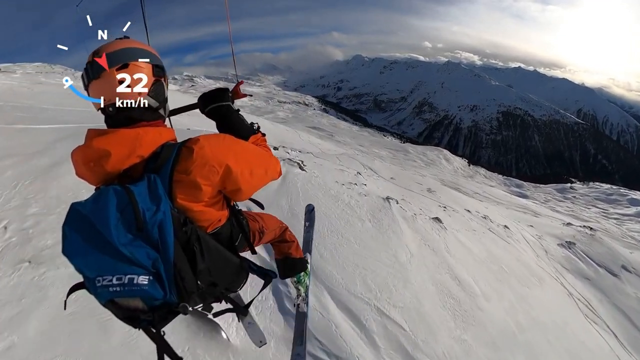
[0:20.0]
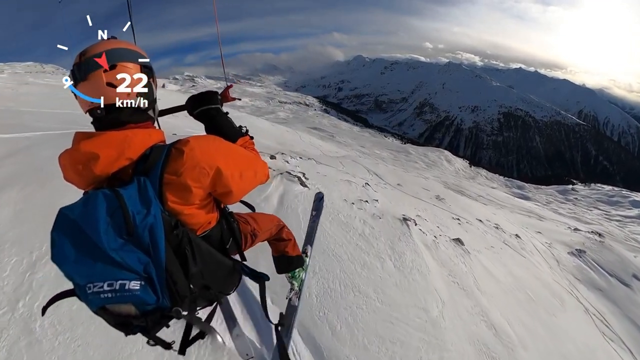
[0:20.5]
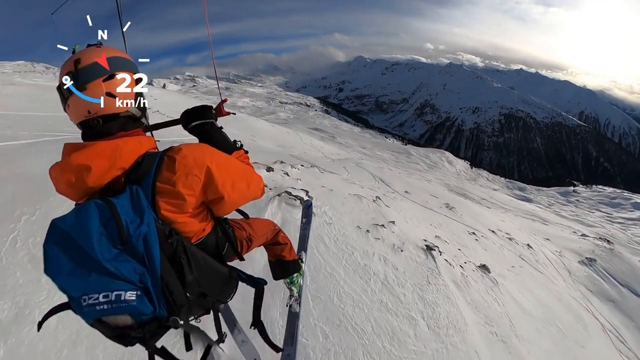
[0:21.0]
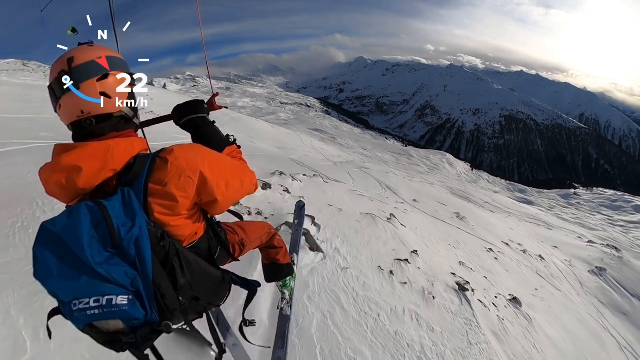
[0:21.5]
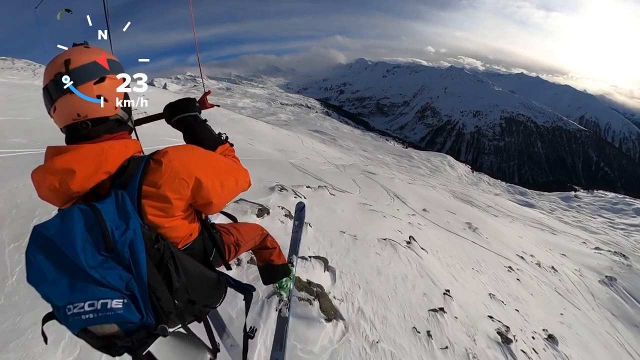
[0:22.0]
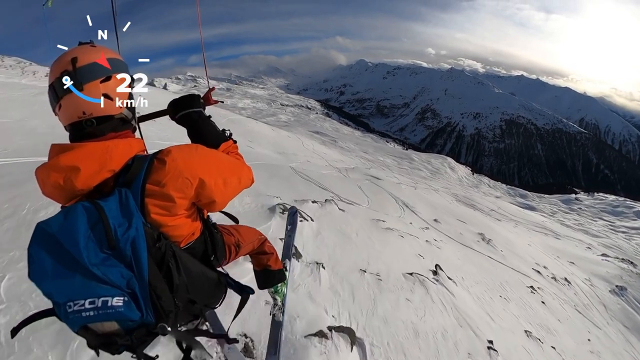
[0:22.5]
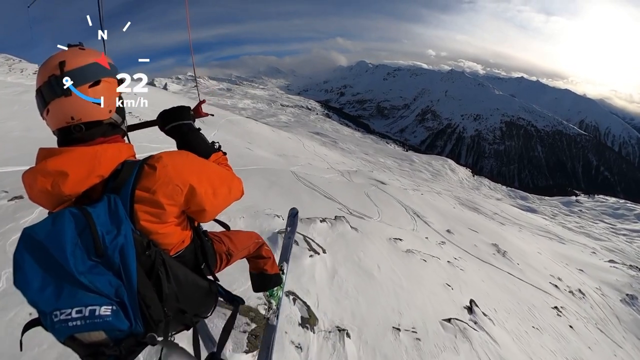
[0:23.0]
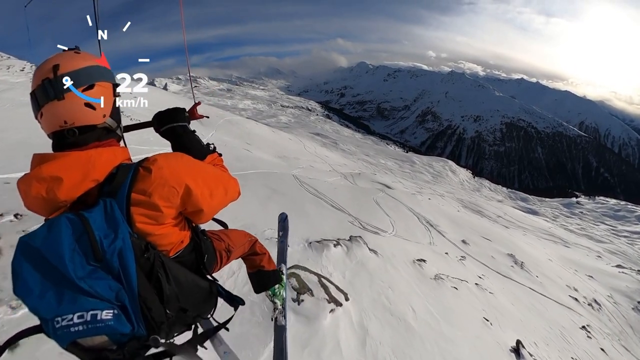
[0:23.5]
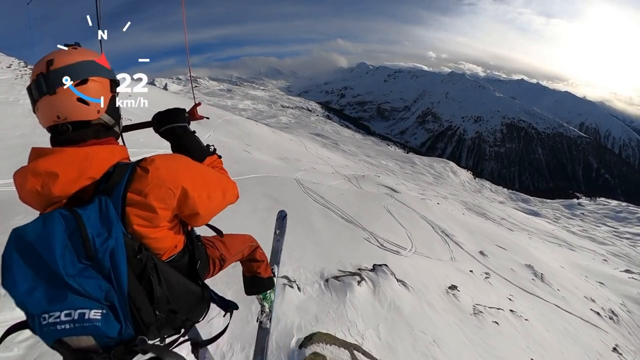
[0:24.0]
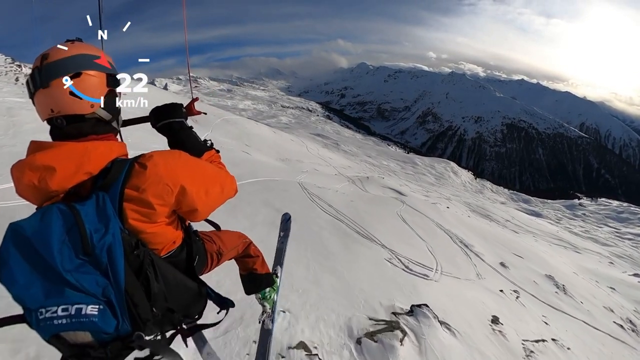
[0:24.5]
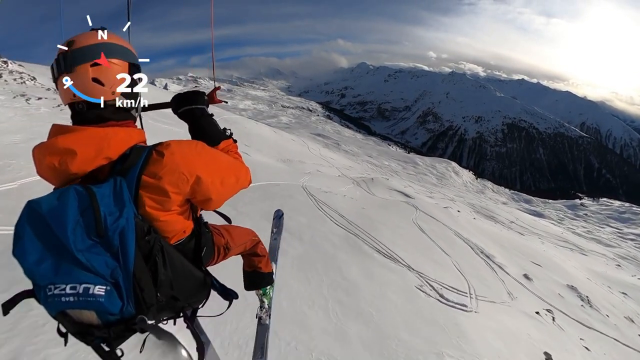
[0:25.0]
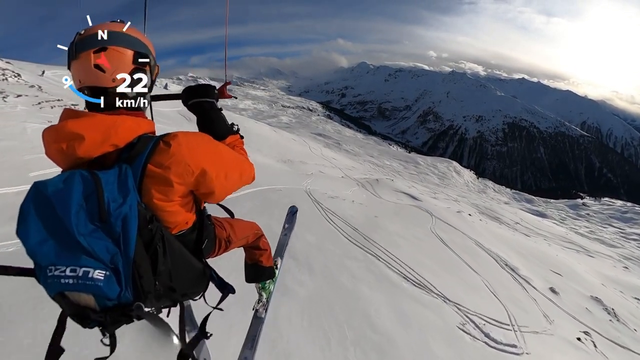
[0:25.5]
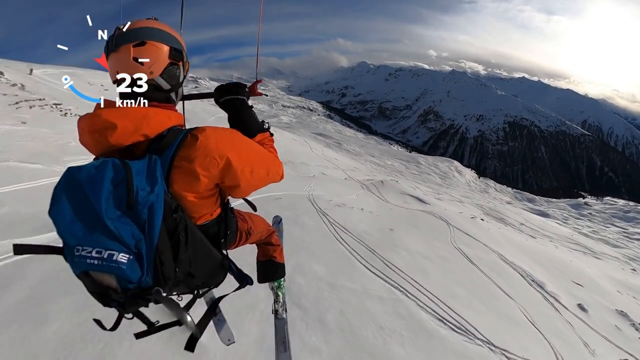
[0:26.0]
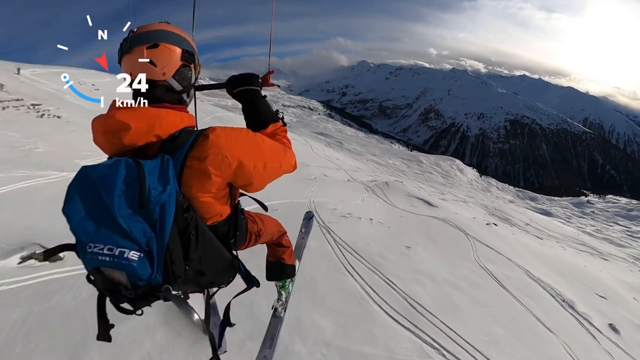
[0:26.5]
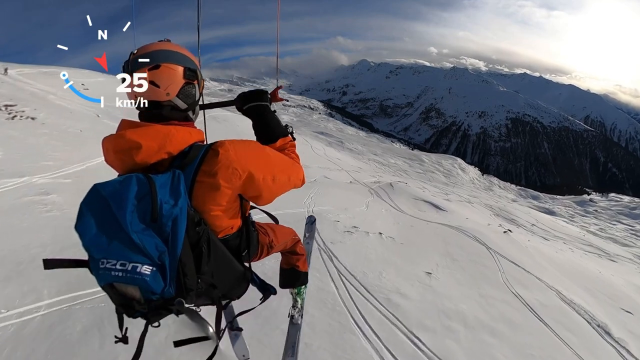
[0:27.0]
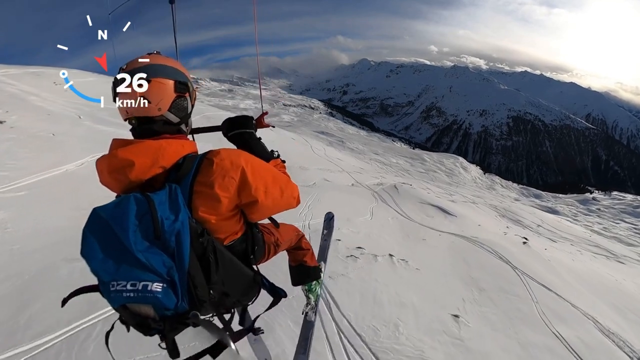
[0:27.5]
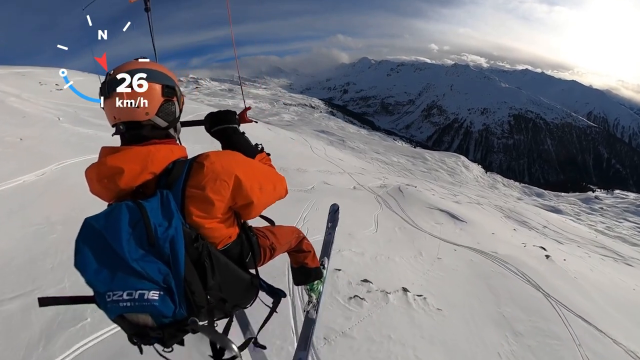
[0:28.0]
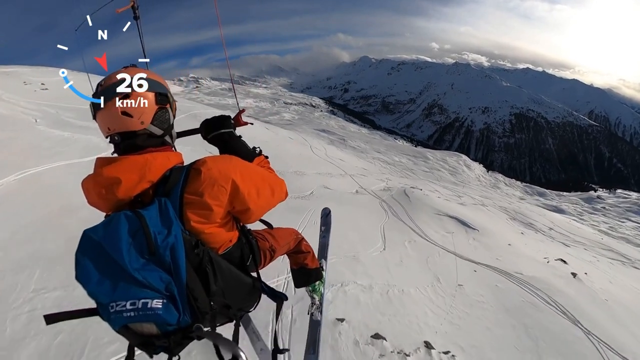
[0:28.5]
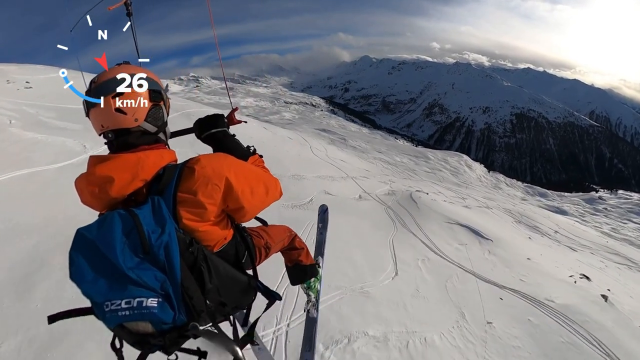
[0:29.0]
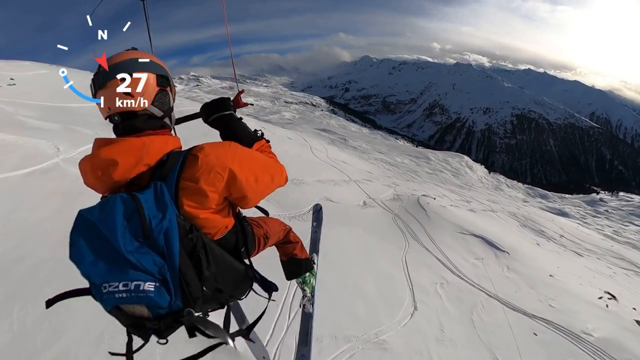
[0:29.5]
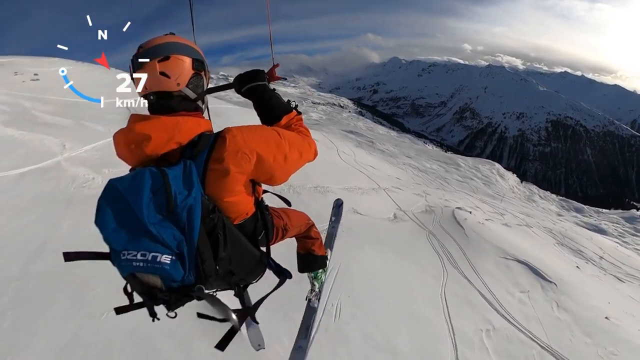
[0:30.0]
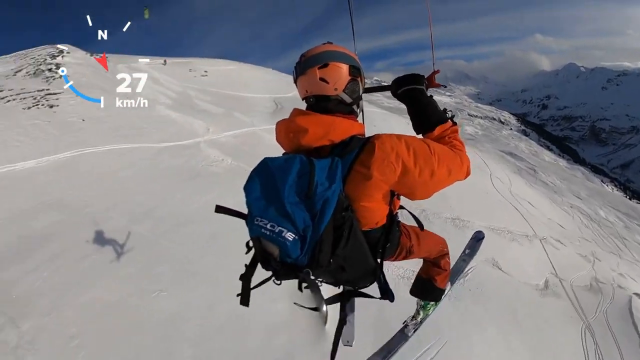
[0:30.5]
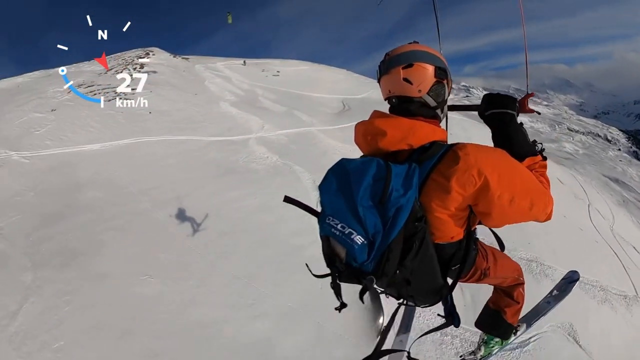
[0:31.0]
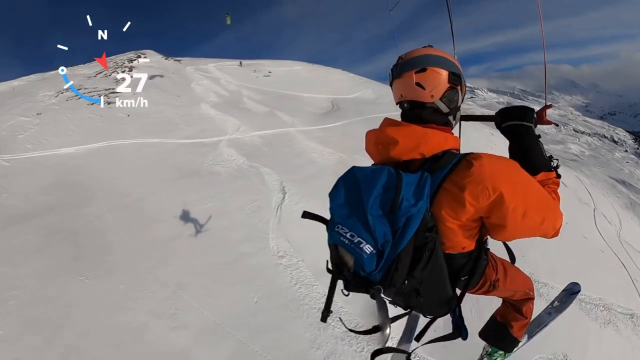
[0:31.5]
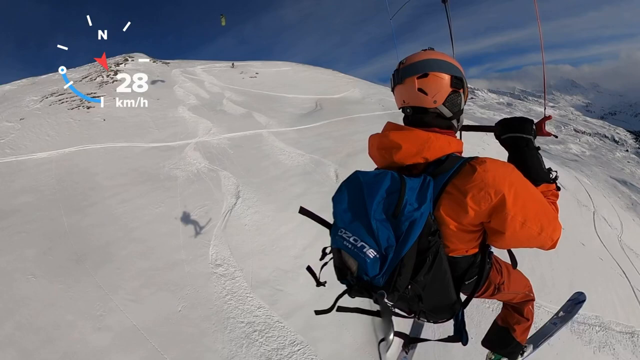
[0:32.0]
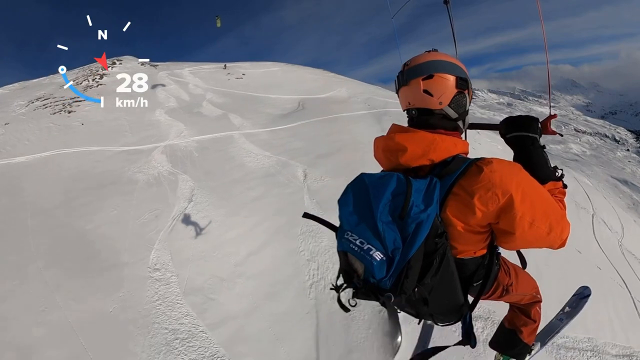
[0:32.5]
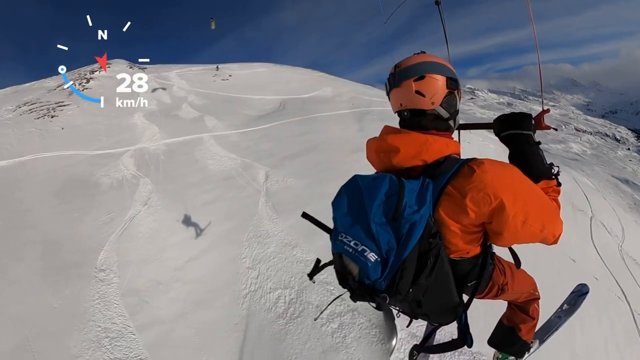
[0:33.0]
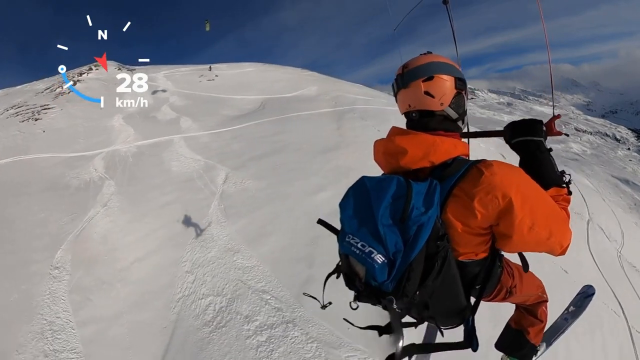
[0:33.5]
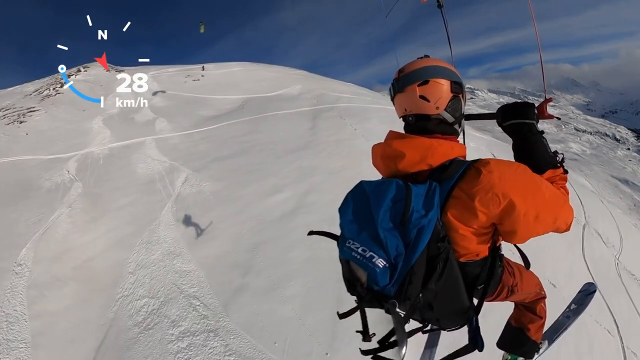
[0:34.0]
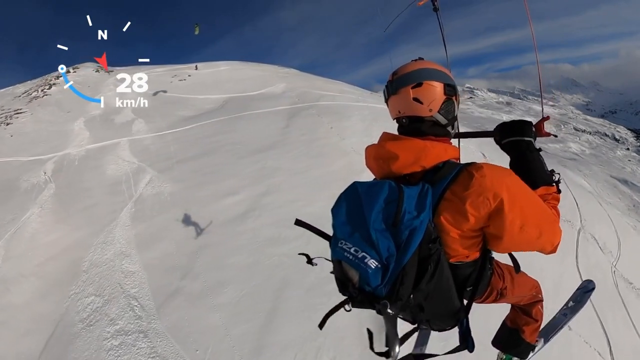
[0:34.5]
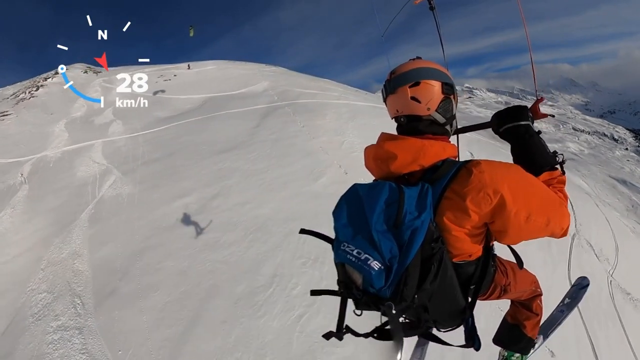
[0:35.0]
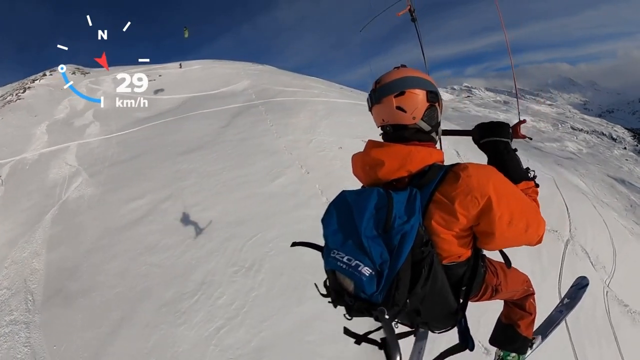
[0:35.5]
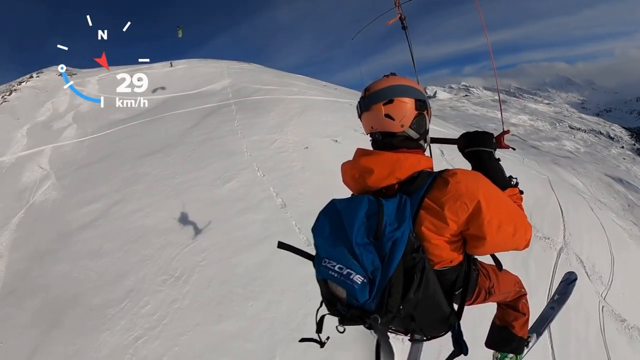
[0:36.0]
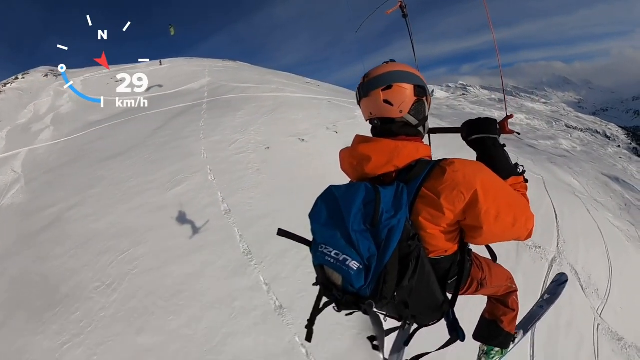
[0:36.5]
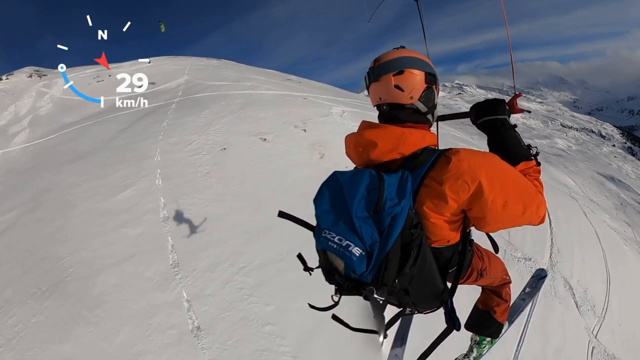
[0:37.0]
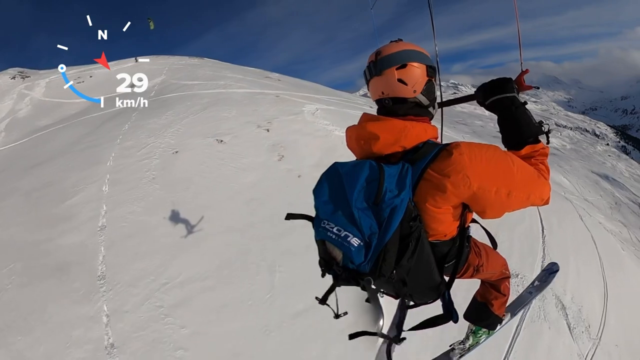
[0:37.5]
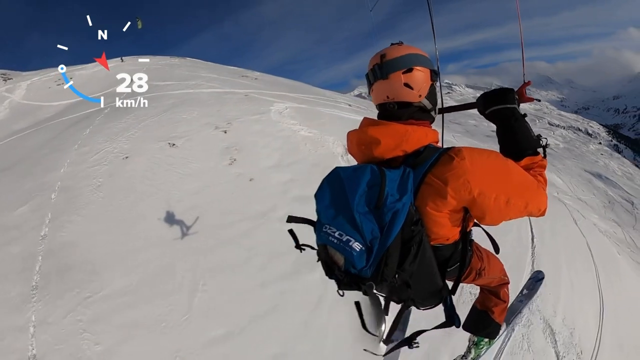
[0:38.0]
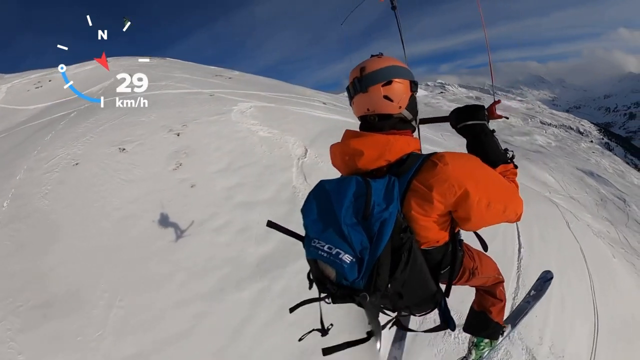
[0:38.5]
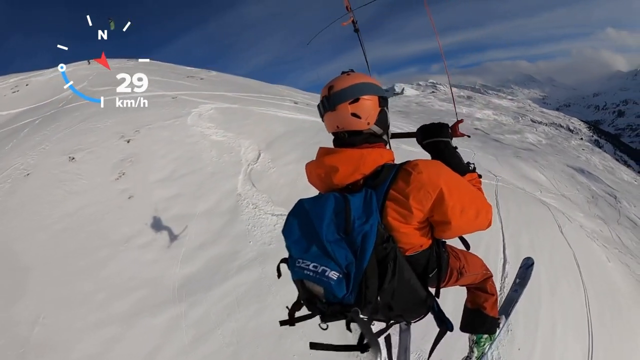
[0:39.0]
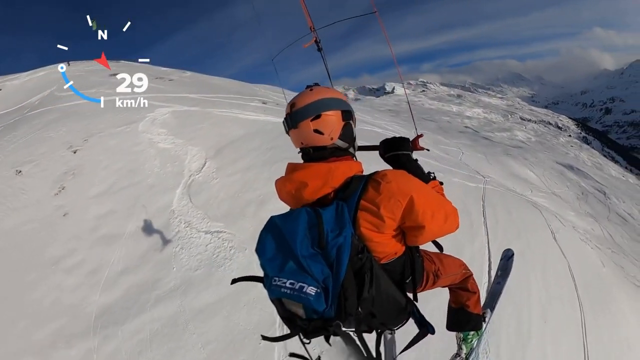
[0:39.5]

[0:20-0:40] The same man is now going 22 kilometers per hour according to the compass. He looks like he has started gliding in the air using the apparatus he holds with his hands; his skis do not appear to touch the ground anymore, and he looks like he is above the ground. A few seconds in, his shadow is visible as he glides down the mountain. He appears to be possibly hang gliding, but he still has his skis on. The wind moves the straps on his backpack. His speed reaches 28 and 29 kilometers per hour and hovers around there. Mountains, clouds and shadows on the mountain are visible in the background. He is the only person in the video.